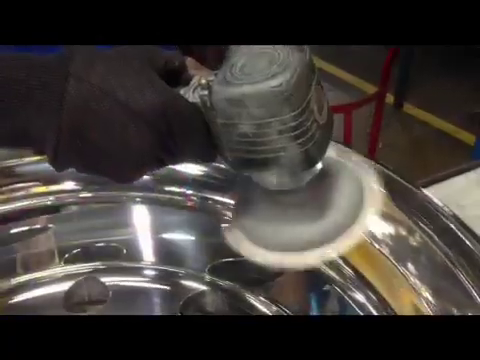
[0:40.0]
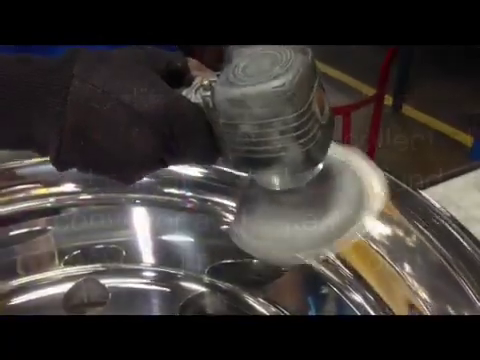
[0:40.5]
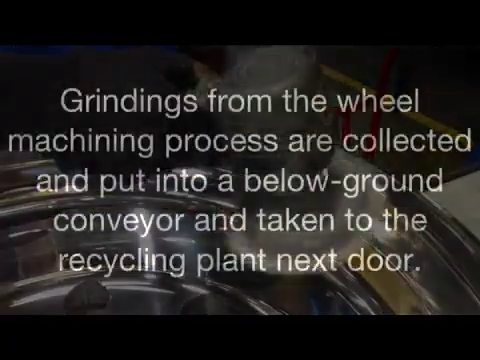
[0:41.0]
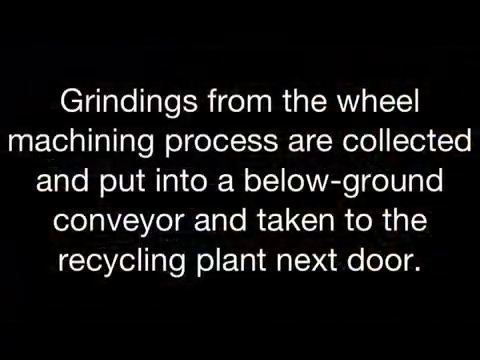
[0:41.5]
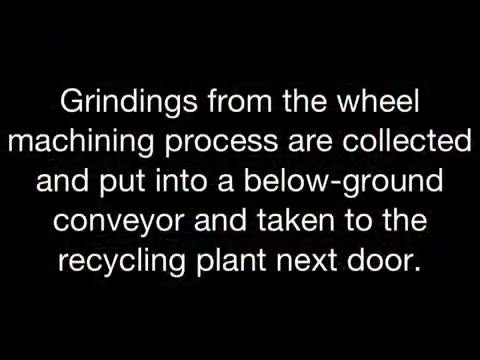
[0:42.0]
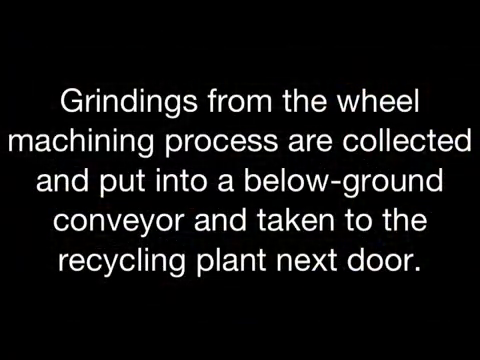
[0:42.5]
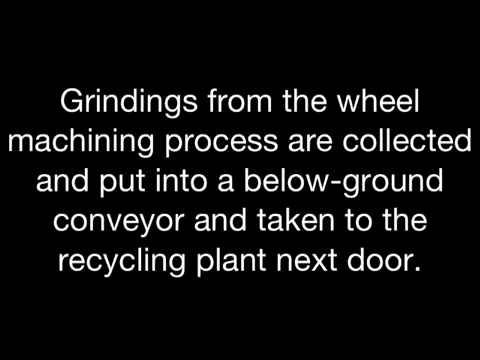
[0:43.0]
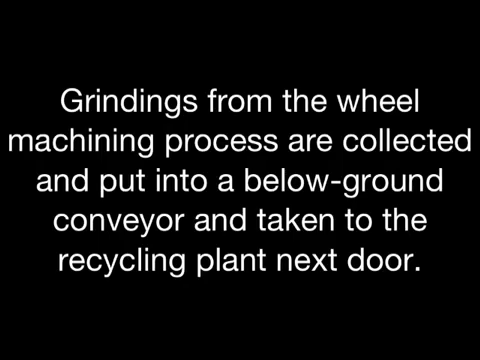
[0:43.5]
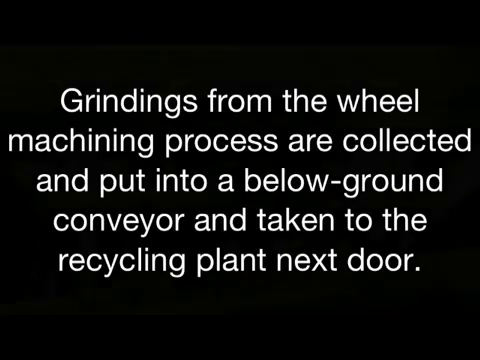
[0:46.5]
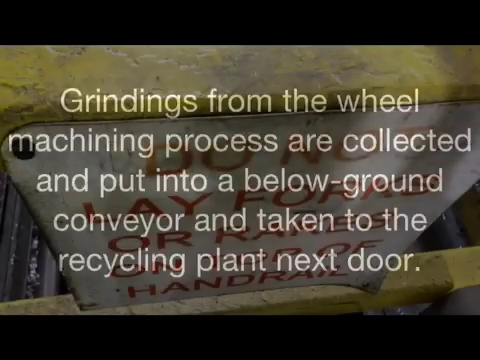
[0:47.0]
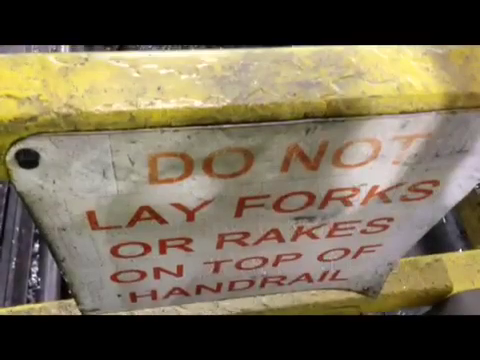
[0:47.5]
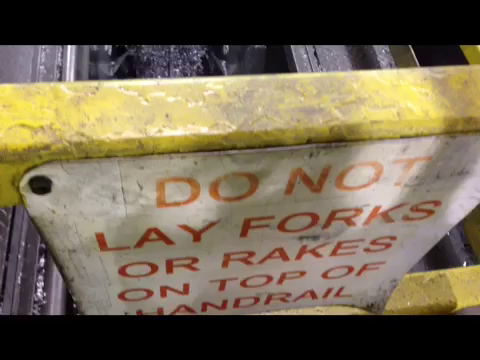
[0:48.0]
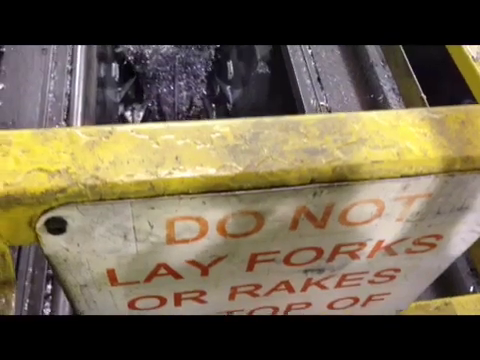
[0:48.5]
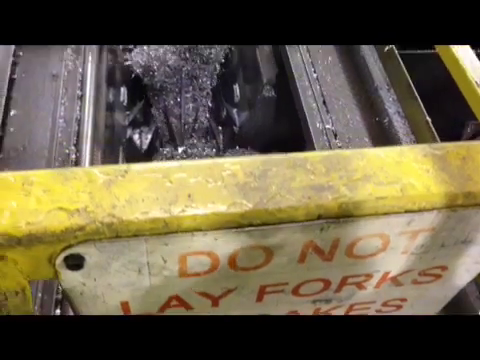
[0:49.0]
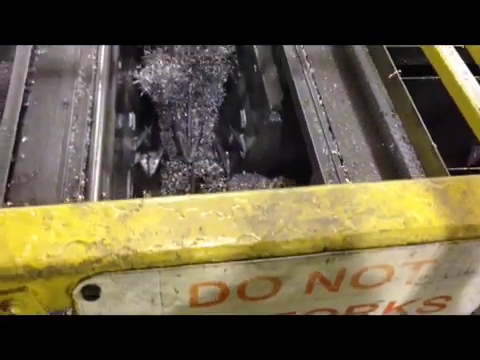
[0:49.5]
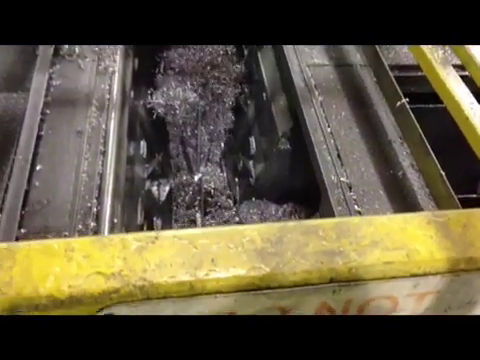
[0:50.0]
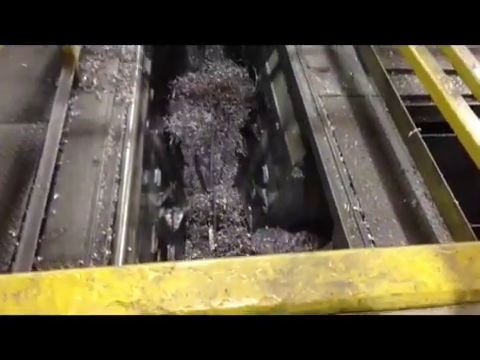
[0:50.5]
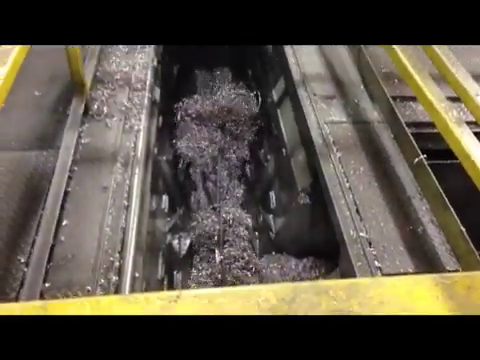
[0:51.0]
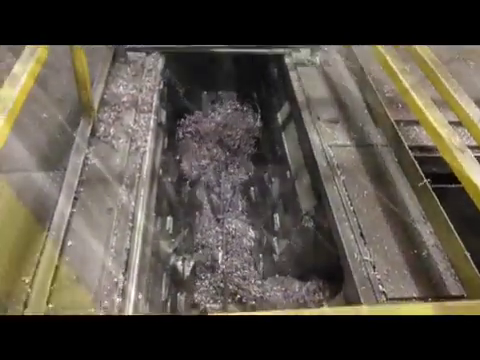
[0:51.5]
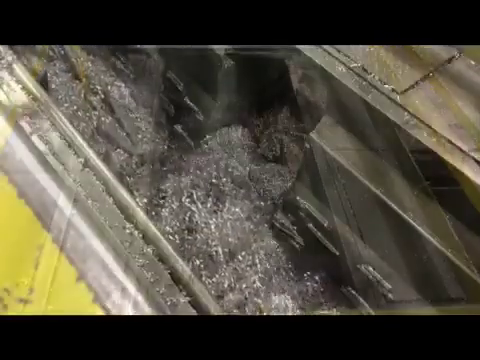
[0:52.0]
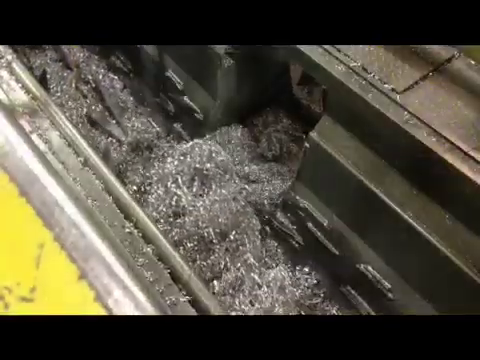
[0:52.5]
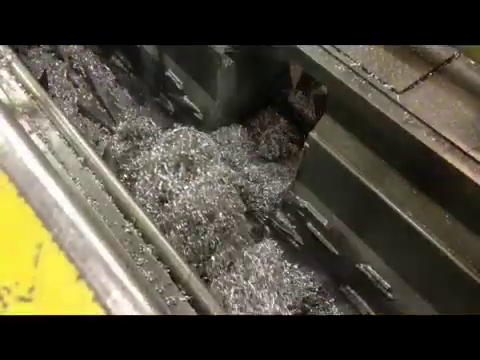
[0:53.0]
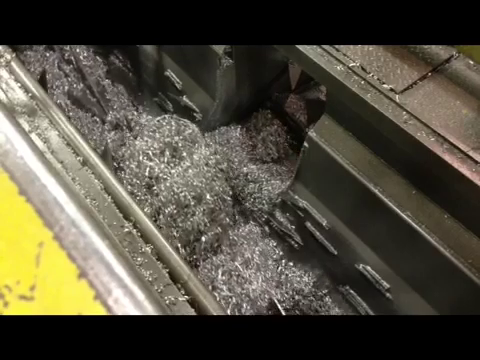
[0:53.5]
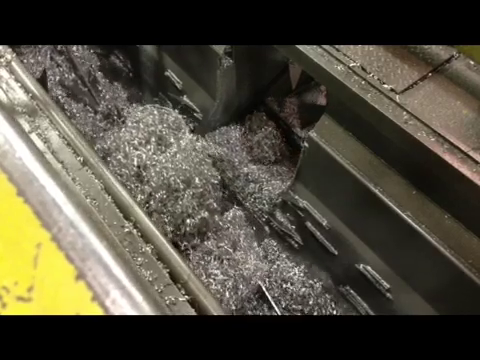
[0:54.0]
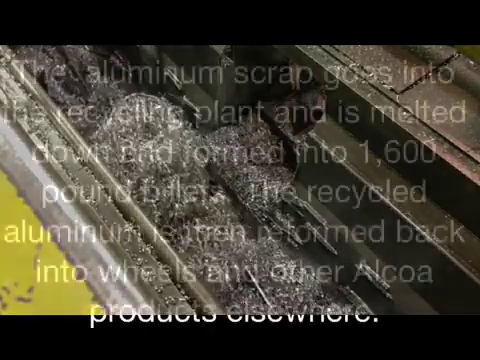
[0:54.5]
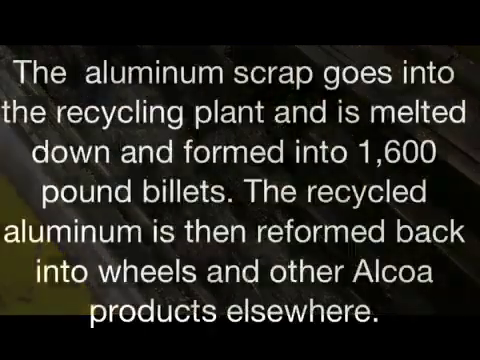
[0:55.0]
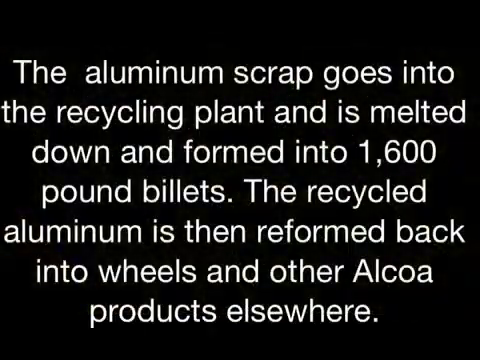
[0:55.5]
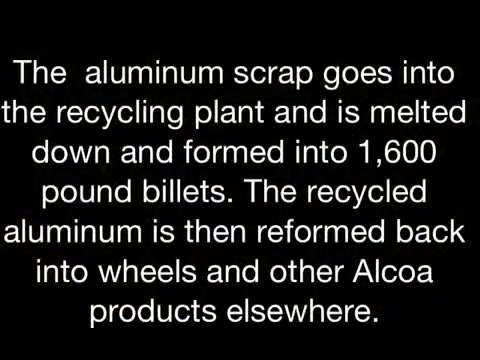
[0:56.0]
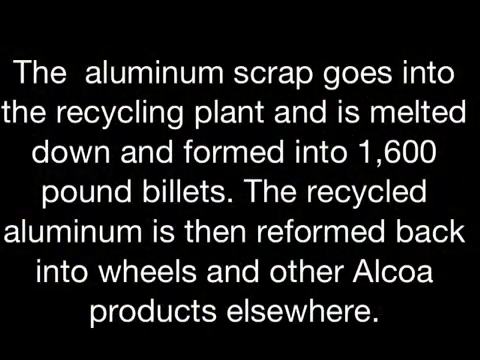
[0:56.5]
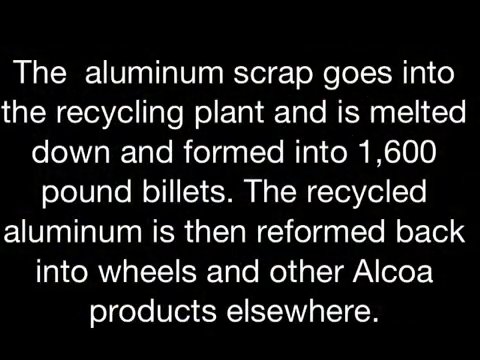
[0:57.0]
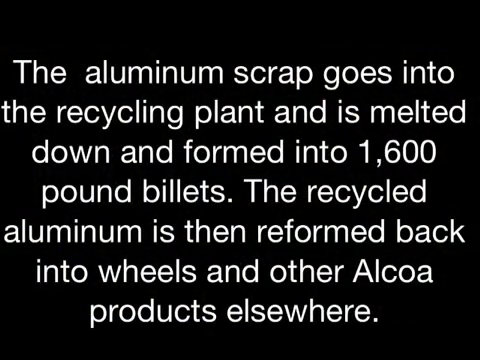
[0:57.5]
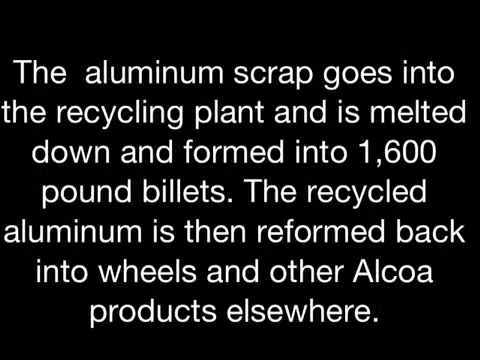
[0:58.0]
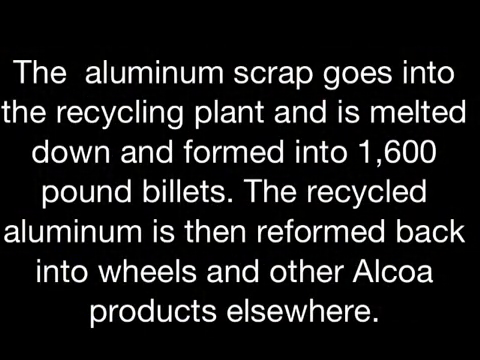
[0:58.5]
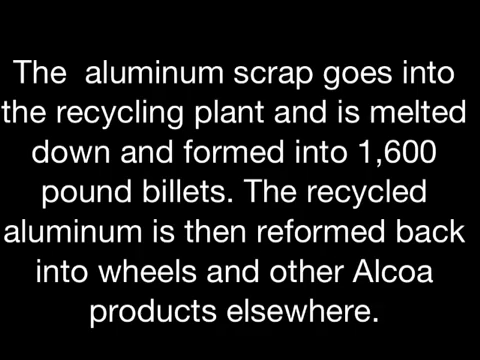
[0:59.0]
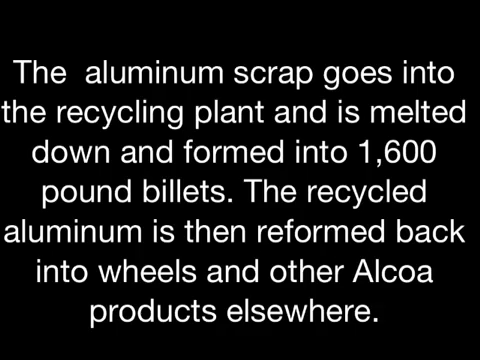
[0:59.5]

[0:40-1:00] In an Alcoa factory where aluminium parts are being created, a hand operates a polishing machine that is polishing a wheel centre that looks like it would be used on a car. A text screen follows, reading "Grindings from the wheel machining process are collected and put into a below ground conveyor and taken to the recycling plant next door." Another scene shows a sign that says "do not lay forks or ropes on top of" and aluminium chippings. A text screen then reads "The aluminium scrap goes into the recycling plant and is melted down and formed into 1,600 pound billets."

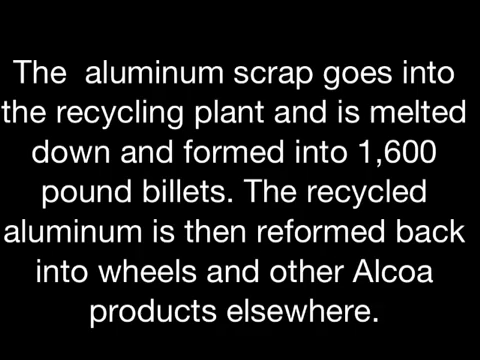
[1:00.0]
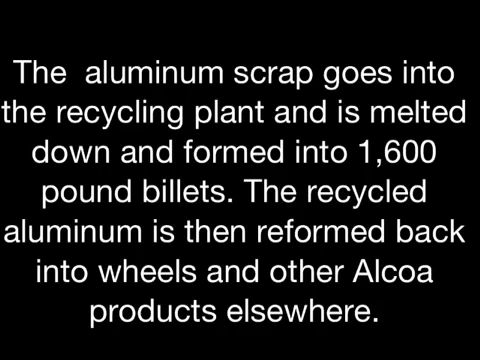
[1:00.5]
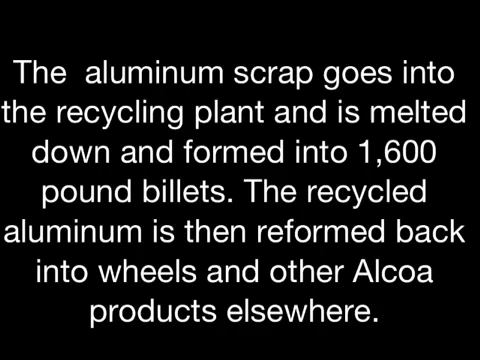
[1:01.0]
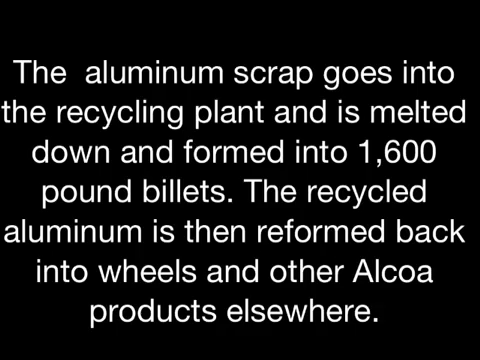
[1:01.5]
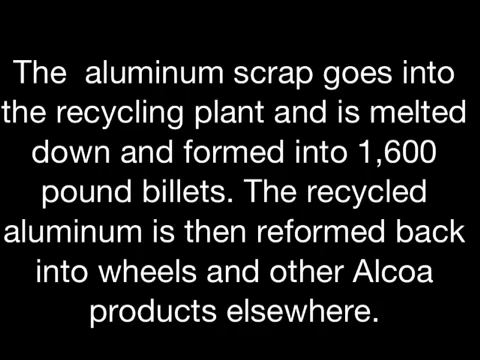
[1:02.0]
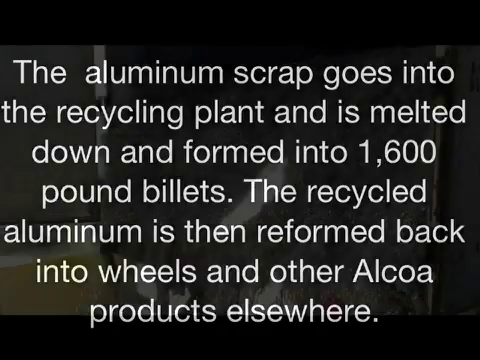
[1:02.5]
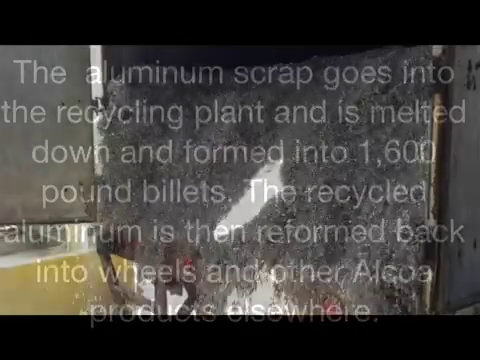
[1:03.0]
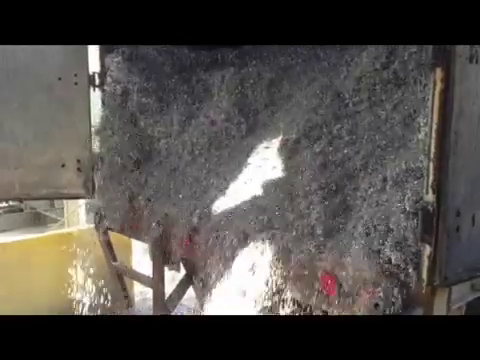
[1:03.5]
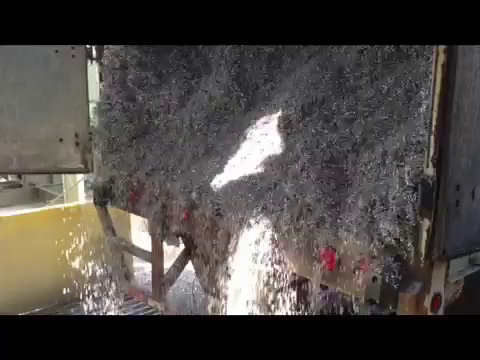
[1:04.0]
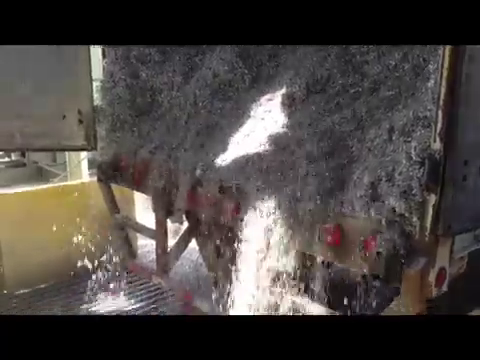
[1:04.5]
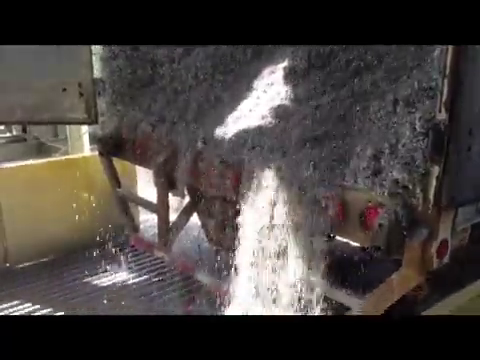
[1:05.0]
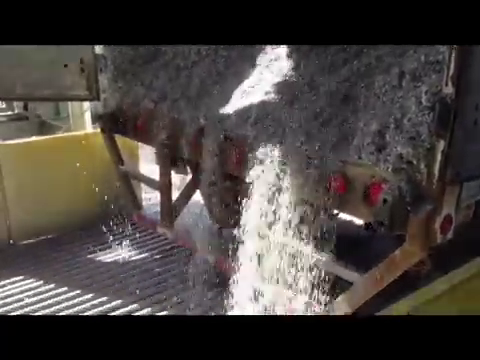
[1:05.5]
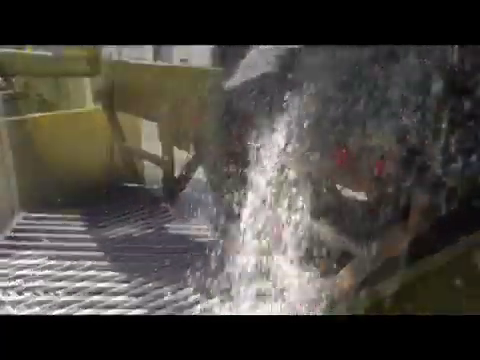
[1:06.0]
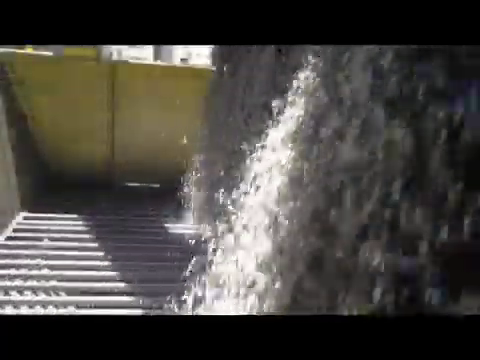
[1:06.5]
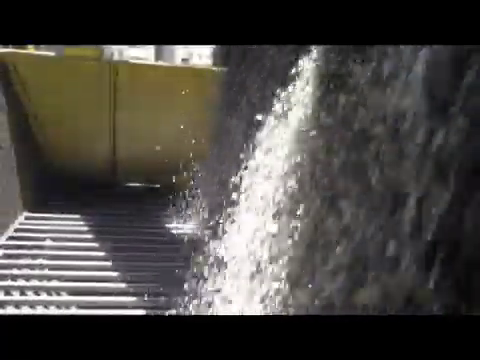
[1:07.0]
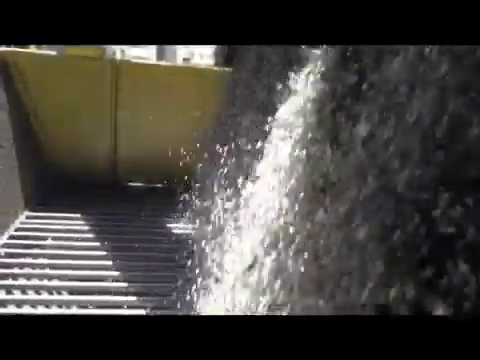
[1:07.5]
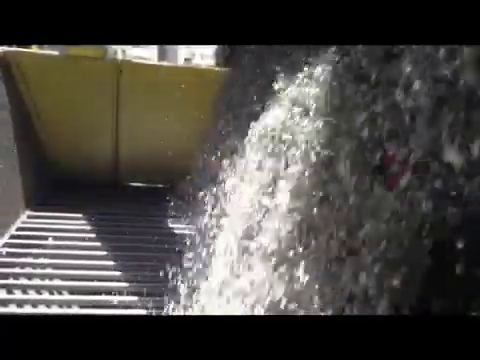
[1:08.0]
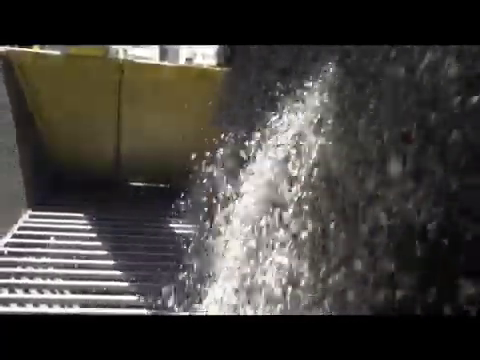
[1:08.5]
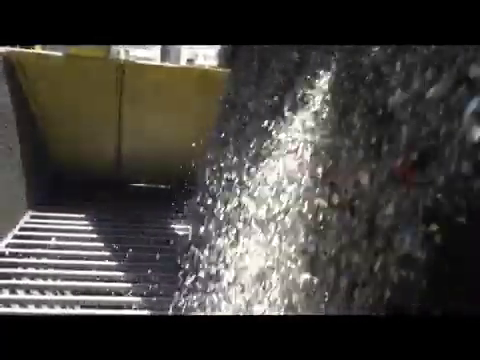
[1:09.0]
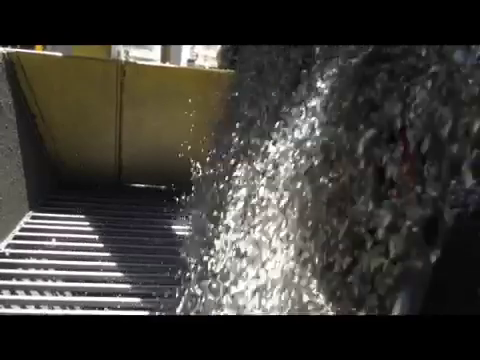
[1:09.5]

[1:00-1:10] A text screen reads "the aluminum scrap goes into the recycling plant and is melted down and formed into 1,600 pound billets. The recycled aluminum is then reformed back into wheels and other Alcoa products elsewhere." The scene then shows the aluminum scrap being emptied into a hopper, tumbling down through it.